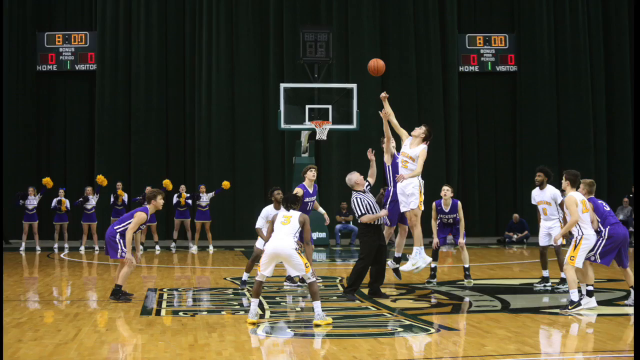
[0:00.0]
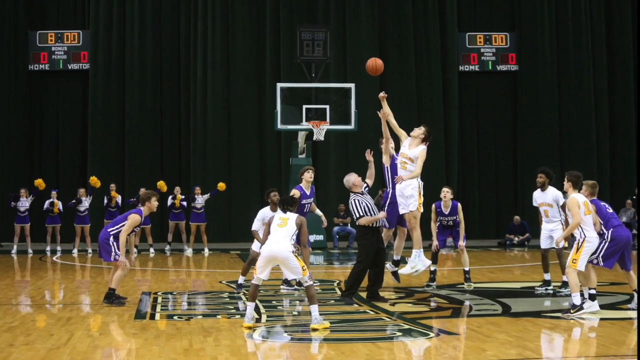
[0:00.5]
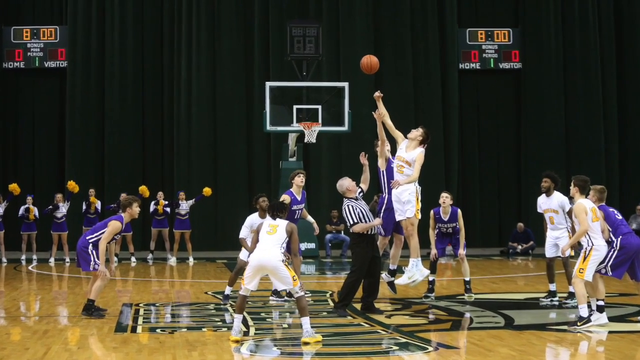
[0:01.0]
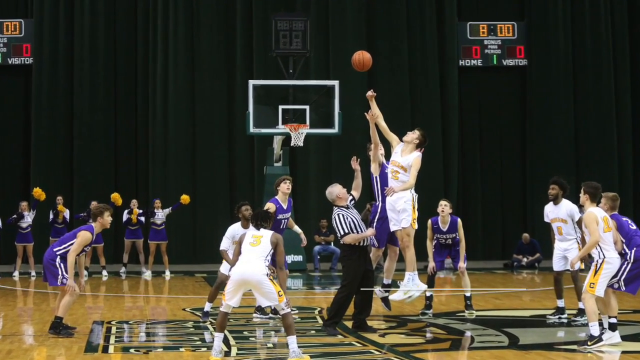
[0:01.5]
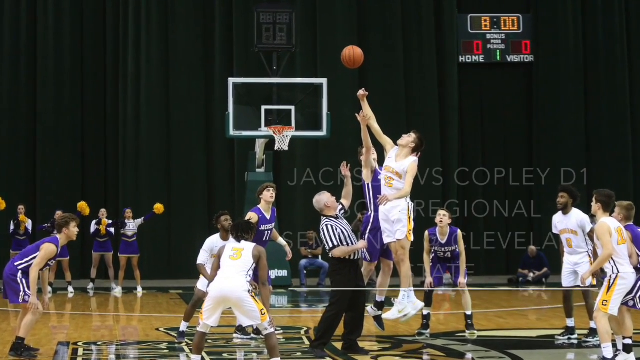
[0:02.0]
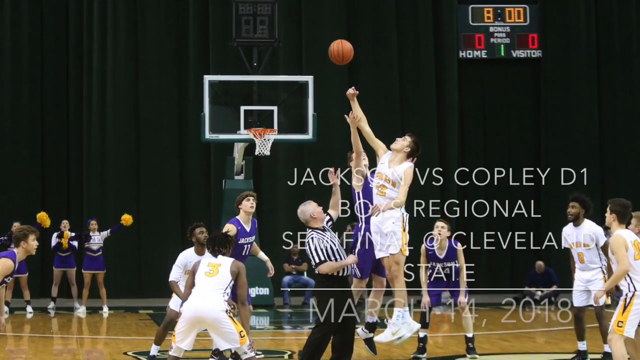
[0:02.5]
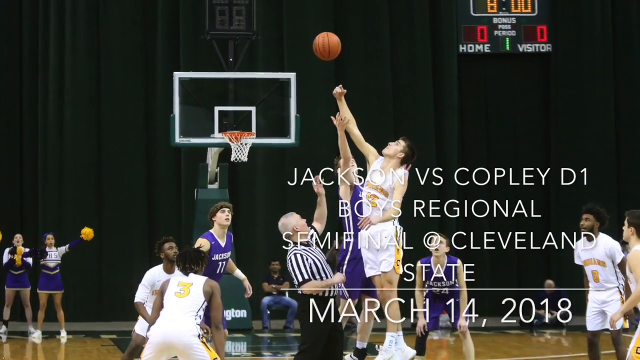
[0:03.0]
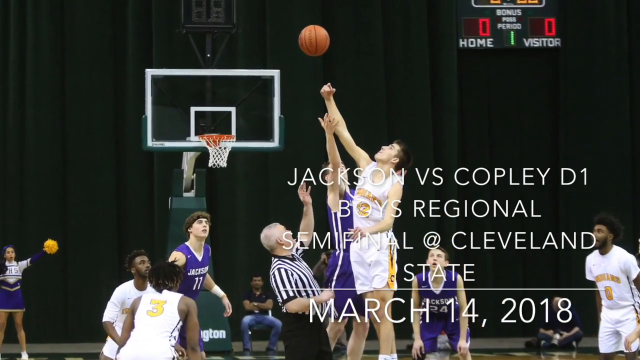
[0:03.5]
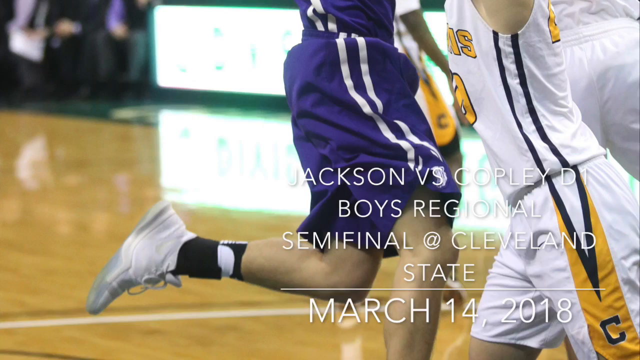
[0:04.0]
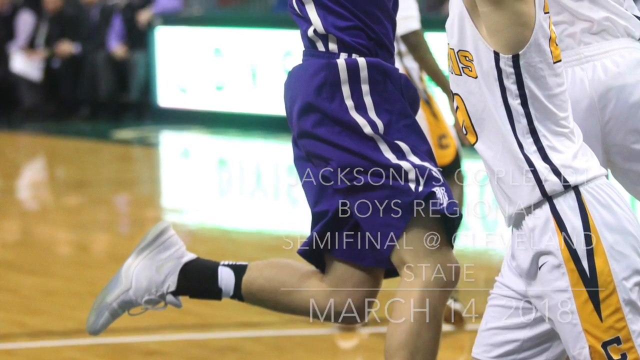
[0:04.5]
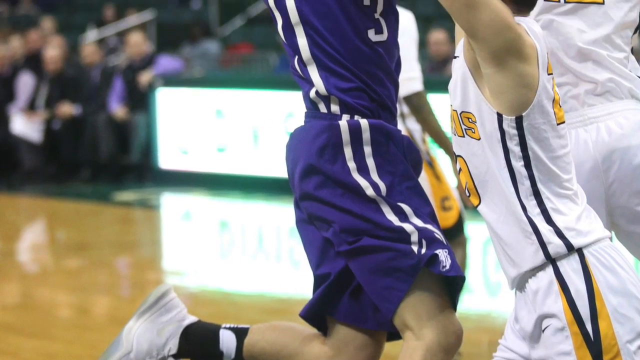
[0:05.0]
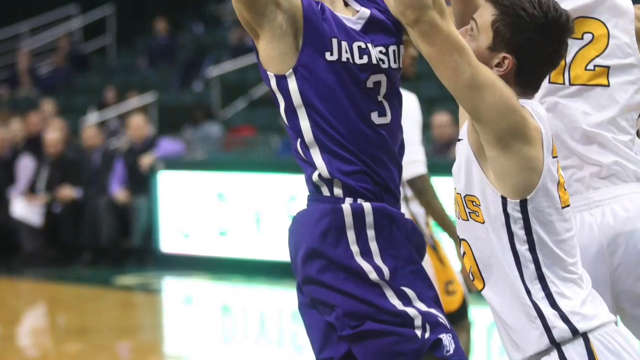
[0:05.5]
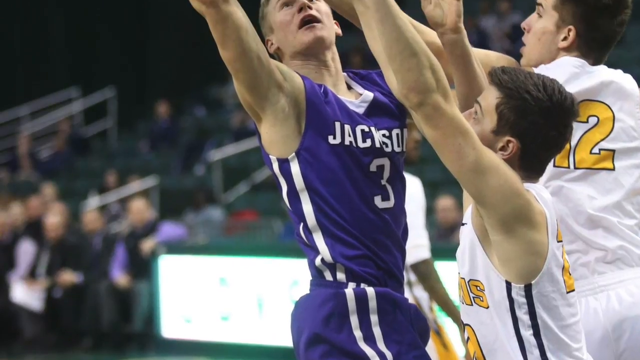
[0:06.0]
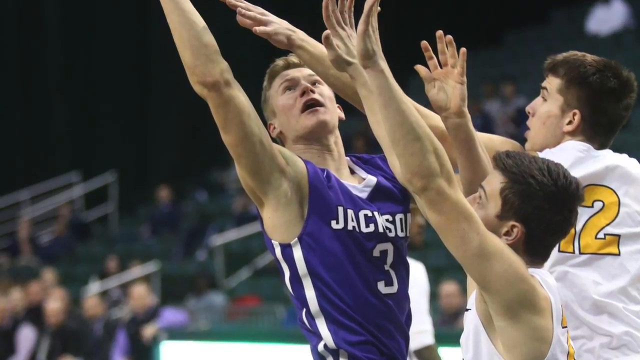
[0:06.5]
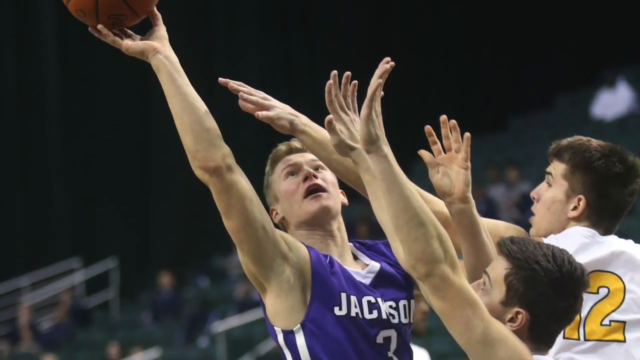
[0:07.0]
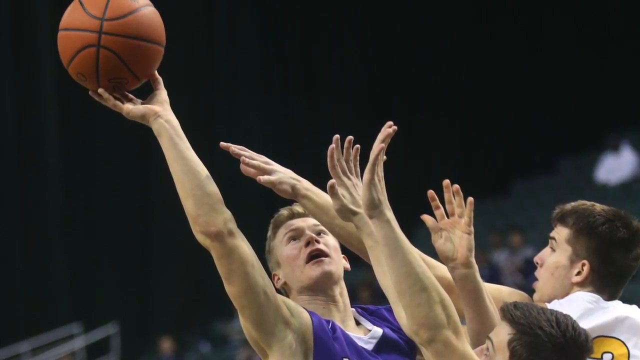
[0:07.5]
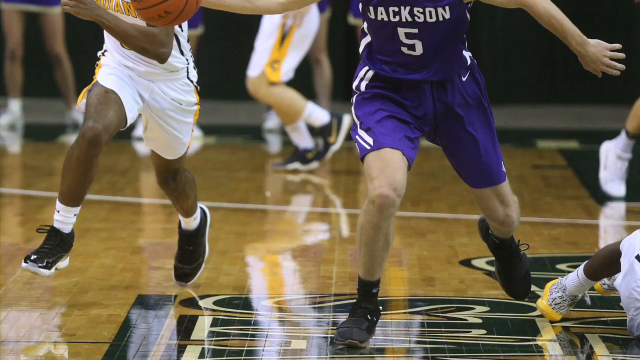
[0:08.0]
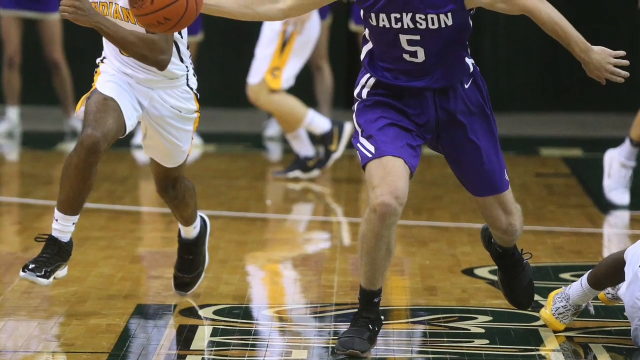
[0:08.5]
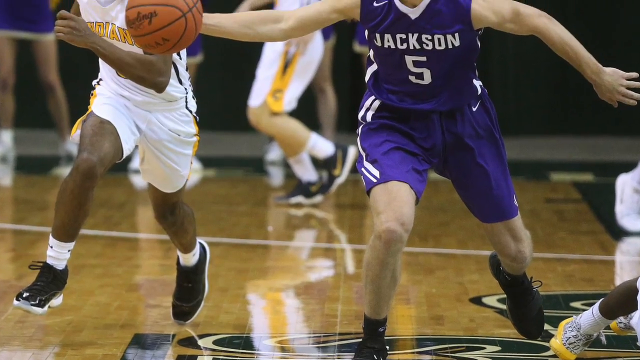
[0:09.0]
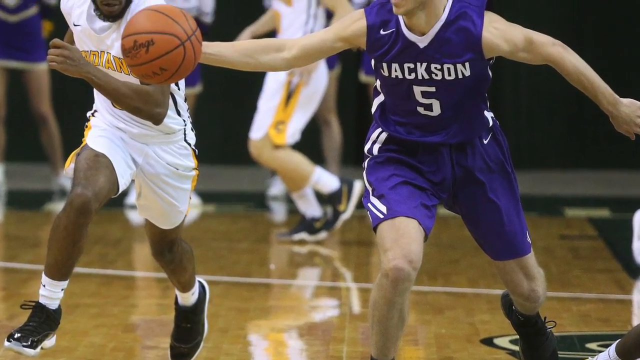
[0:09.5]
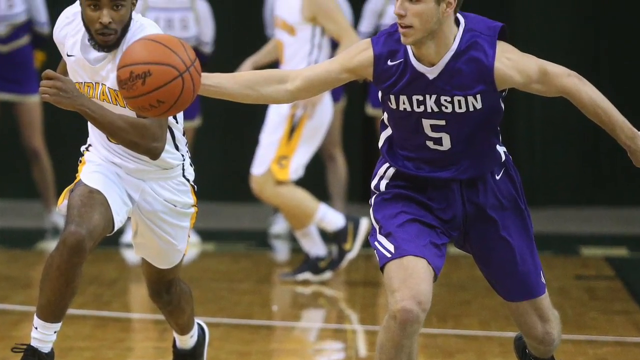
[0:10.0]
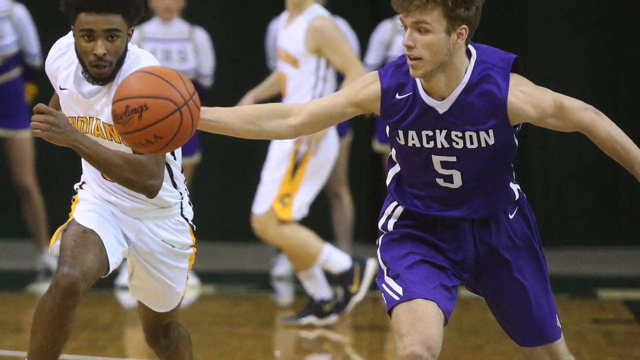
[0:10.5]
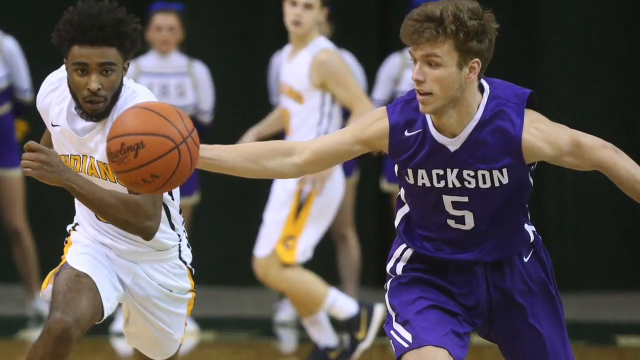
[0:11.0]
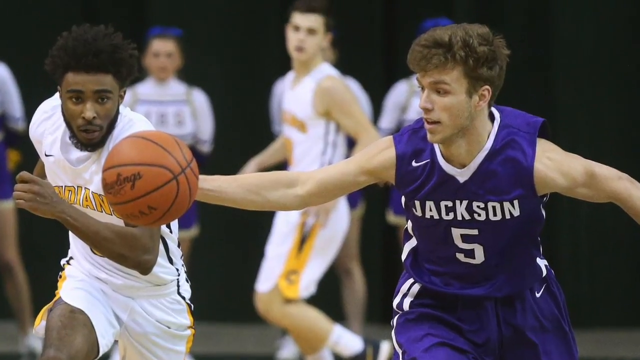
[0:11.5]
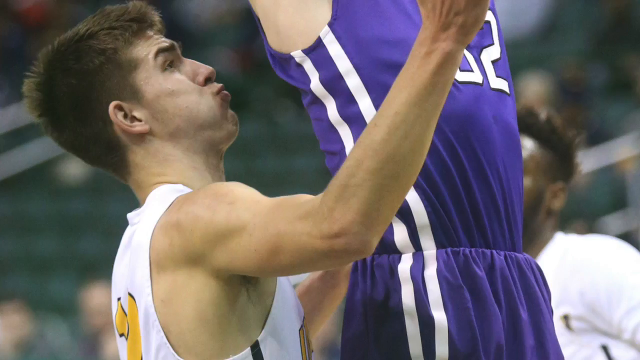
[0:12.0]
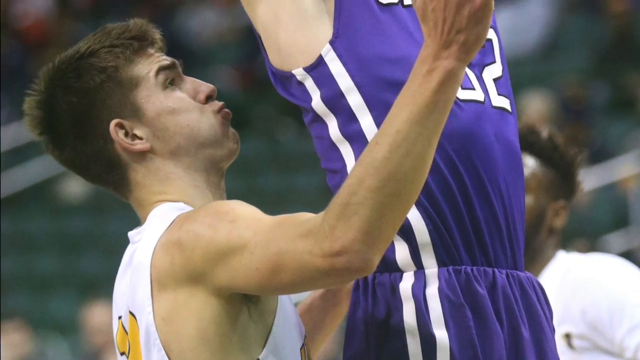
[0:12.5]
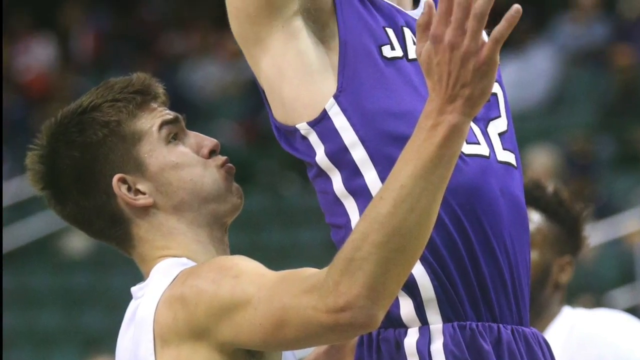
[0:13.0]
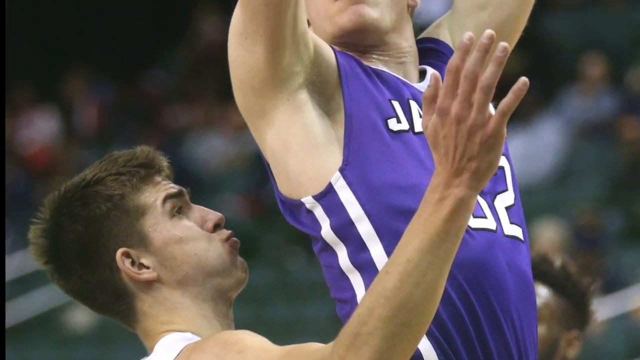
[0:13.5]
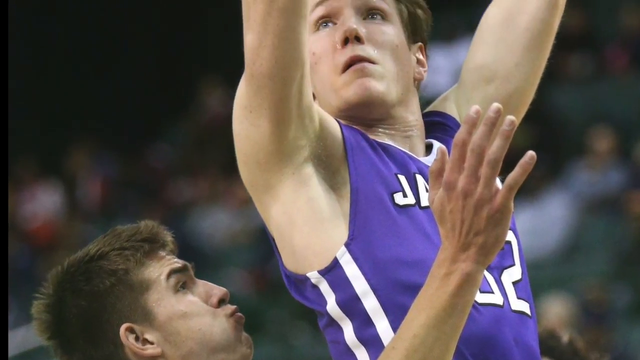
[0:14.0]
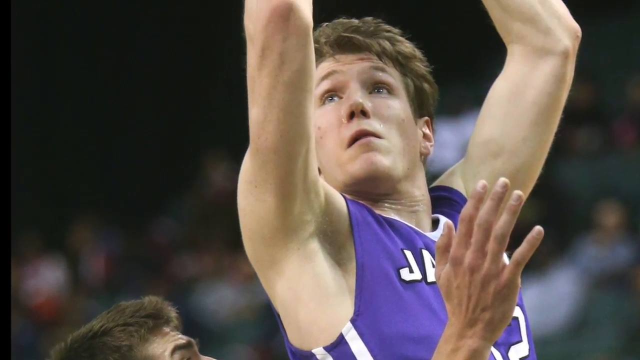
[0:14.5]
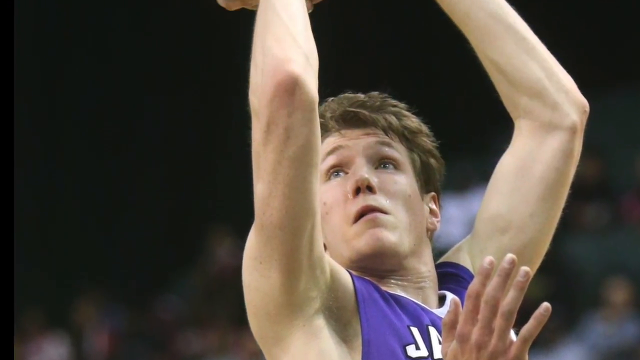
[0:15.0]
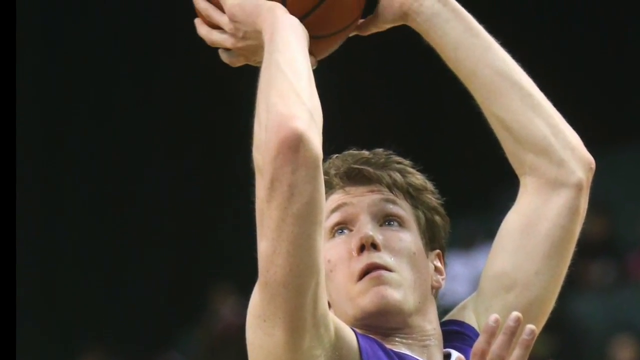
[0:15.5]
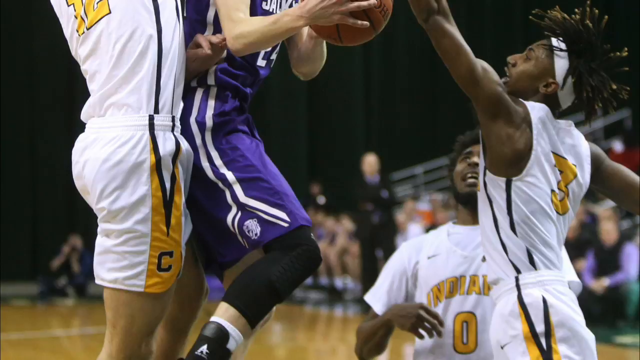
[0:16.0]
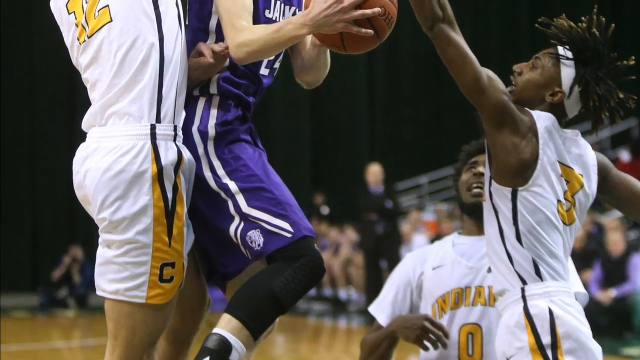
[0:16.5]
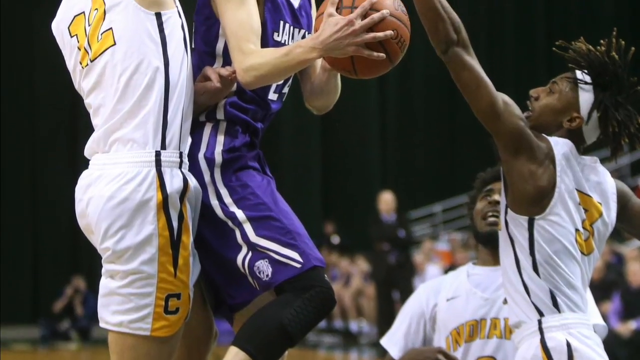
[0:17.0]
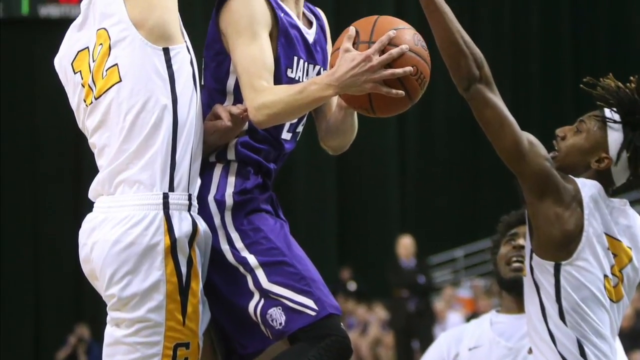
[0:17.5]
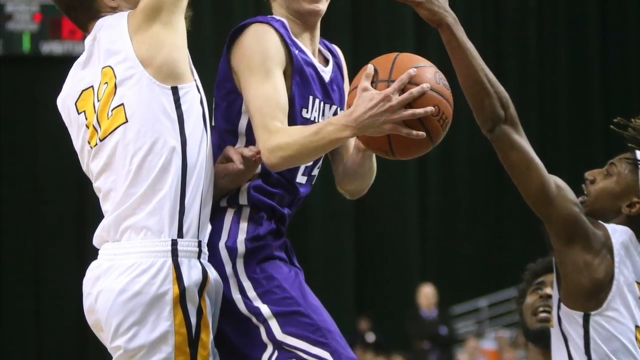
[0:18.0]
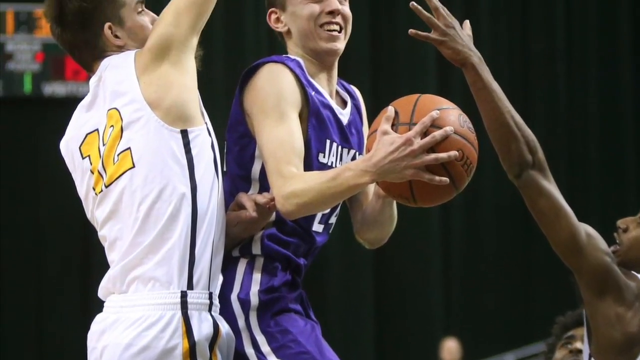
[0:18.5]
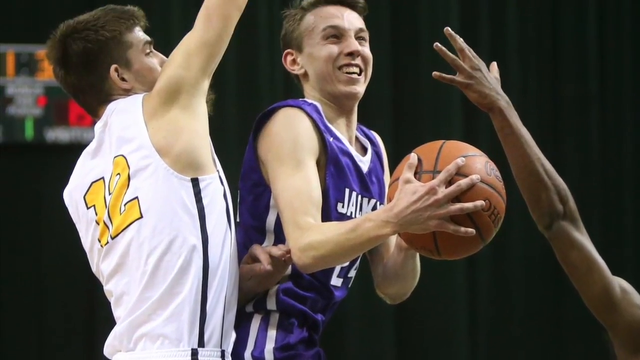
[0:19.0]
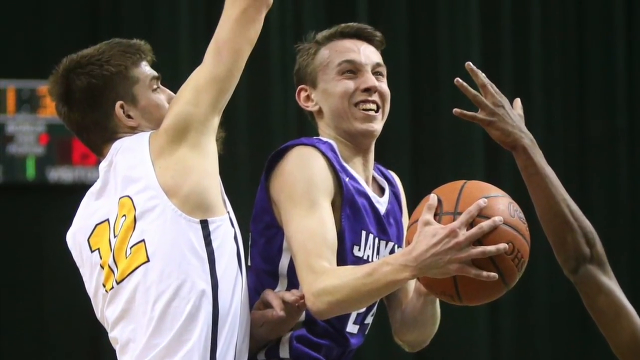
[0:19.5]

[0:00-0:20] The video opens on a still shot of a basketball game, and the camera zooms in to two players going up for a tip of the ball. Text reads "Jackson vs. Copley D1 Boys Regional Semi-Final at Cleveland State March 14, 2018." One team is in white and gold and the other in purple and white. Five cheerleaders in purple and white with gold pom-poms are in the background, along with a big black curtain. A man is seated under the hoop with his arms folded, and another man with a camera is sitting cross-legged in the back. The video moves to another photo from the game: a Jackson player looks to shoot a layup as two players from the other team try to block him, the ball in his right hand. In the next picture, Jackson's number 5 seems to be corralling the ball in his right hand with his arms stretched out while a player from the other team runs toward it. The camera goes from the bottom to the top of the image. Another still shows a Jackson player leaping above a defender as he goes up for a shot. In another photo, a Jackson player is between two defenders: number 12 on his left jumps to block the shot, while another player on the right, not as high, looks like he is about to get a hand on the ball with his left.